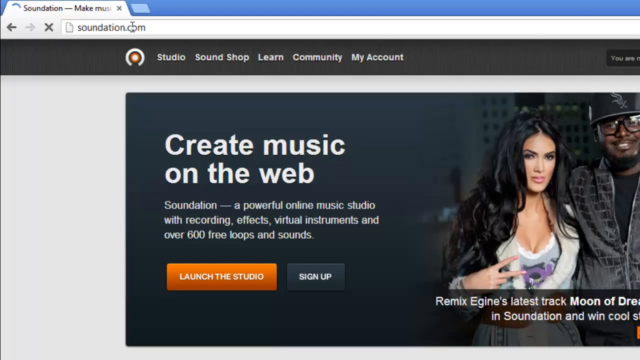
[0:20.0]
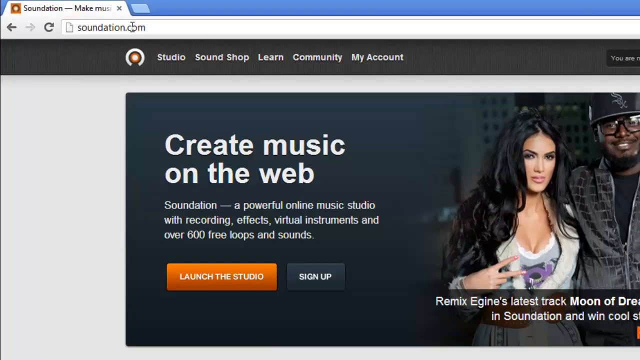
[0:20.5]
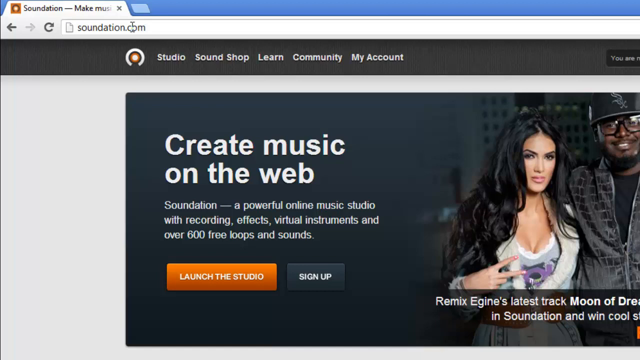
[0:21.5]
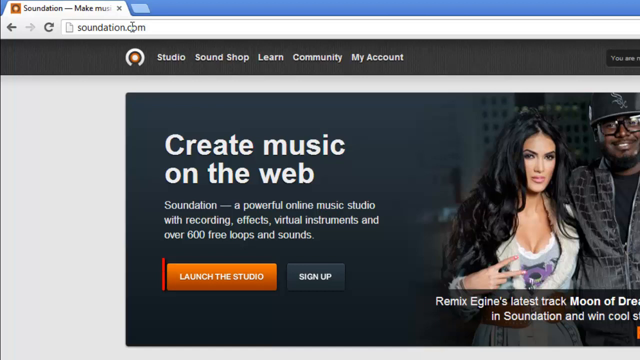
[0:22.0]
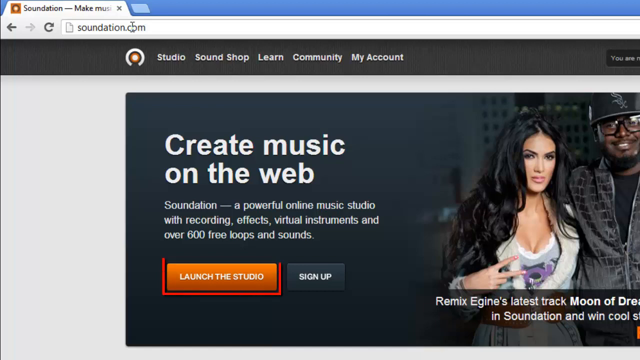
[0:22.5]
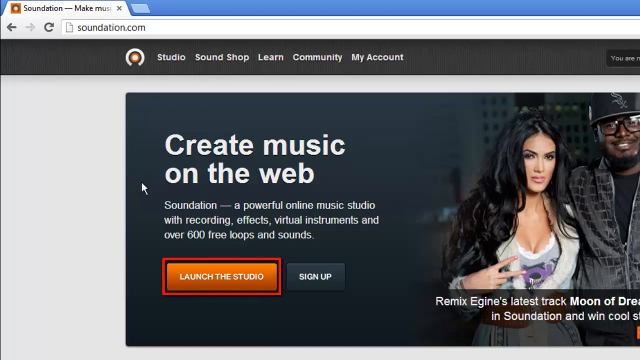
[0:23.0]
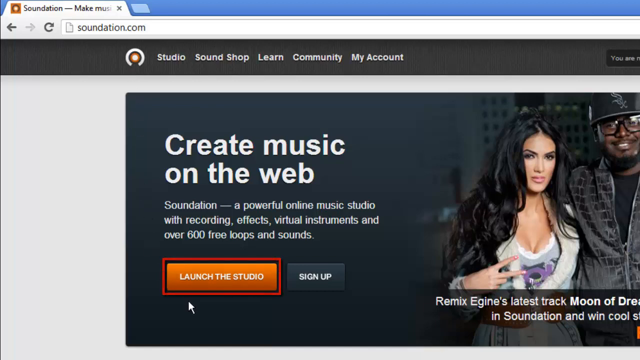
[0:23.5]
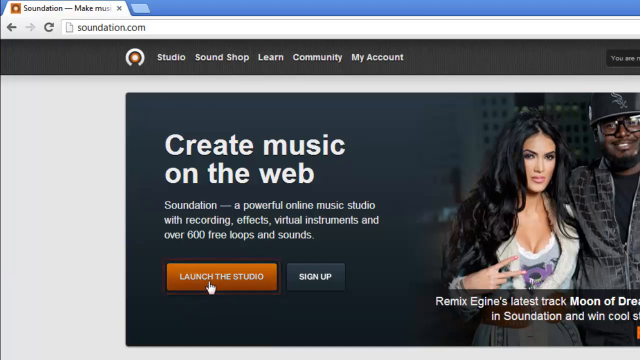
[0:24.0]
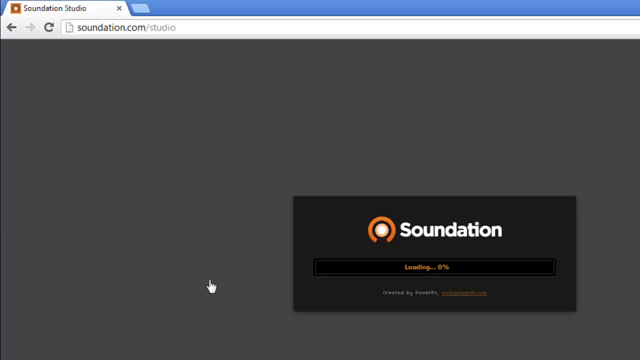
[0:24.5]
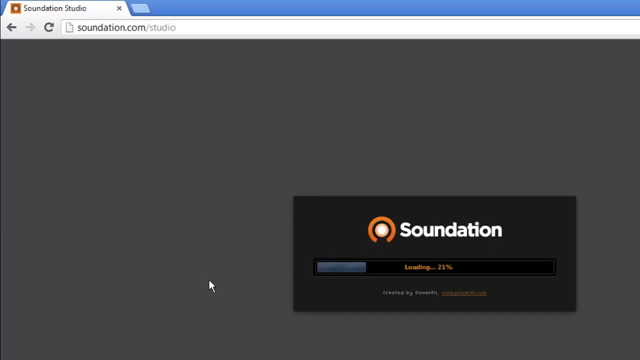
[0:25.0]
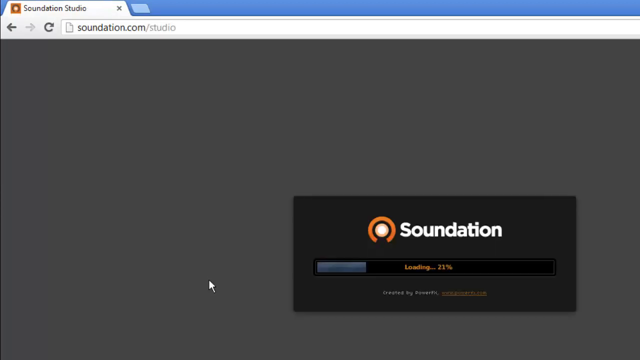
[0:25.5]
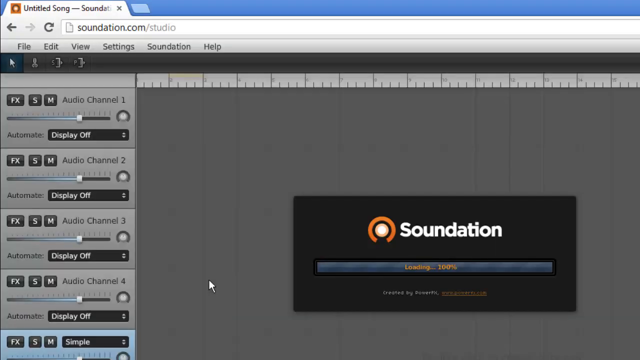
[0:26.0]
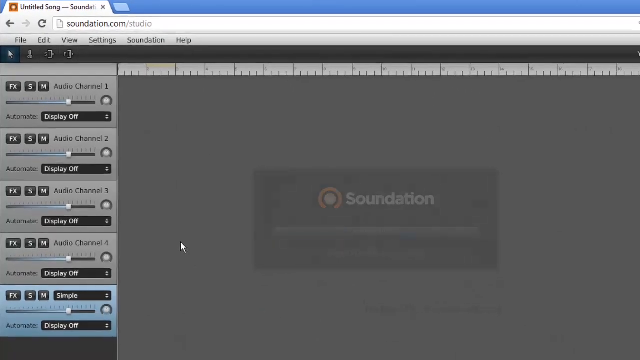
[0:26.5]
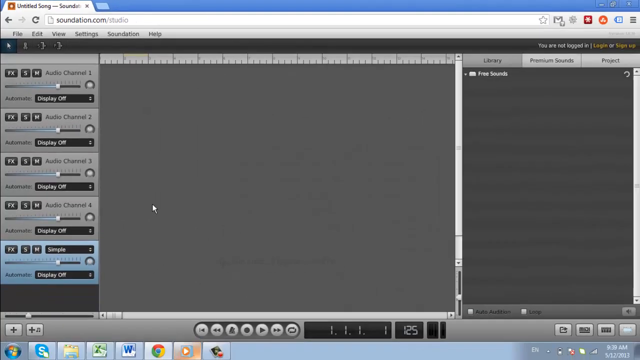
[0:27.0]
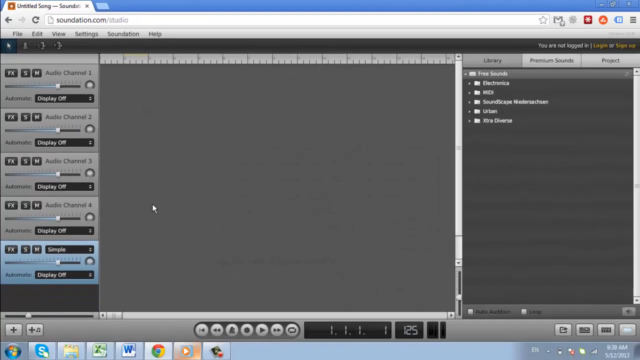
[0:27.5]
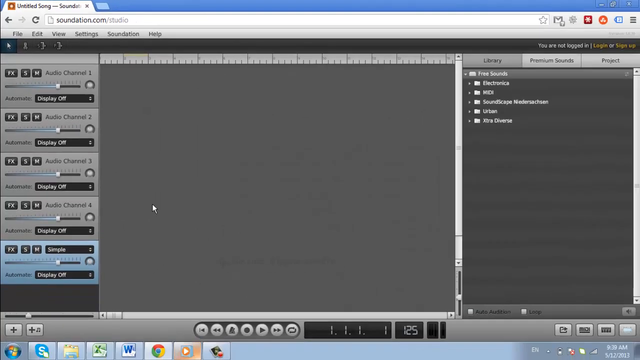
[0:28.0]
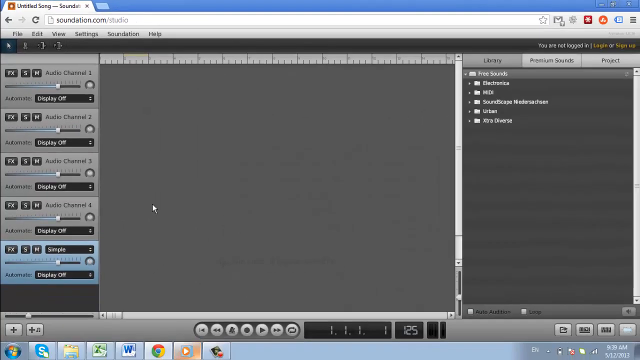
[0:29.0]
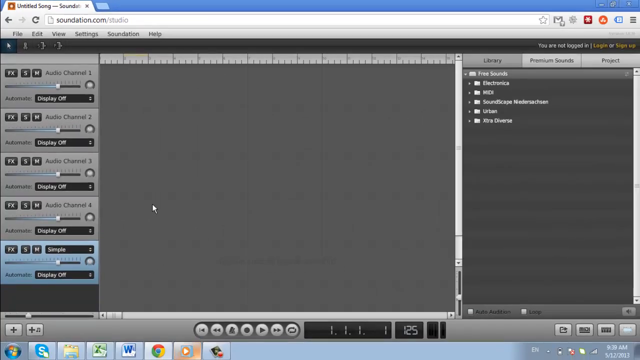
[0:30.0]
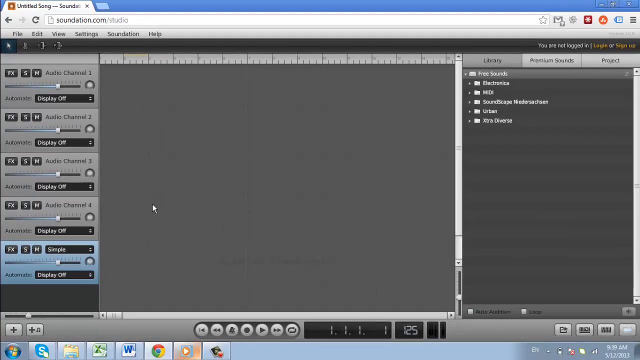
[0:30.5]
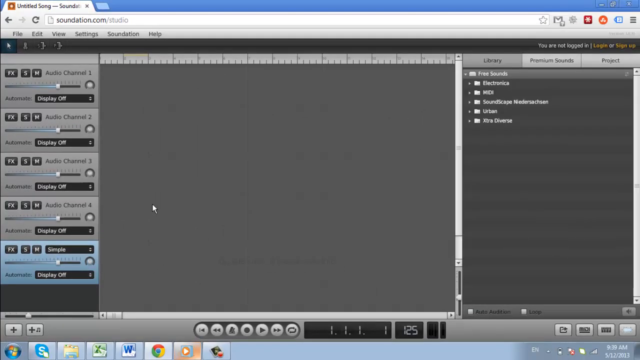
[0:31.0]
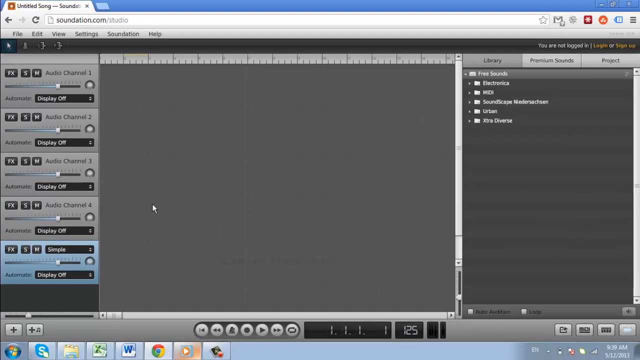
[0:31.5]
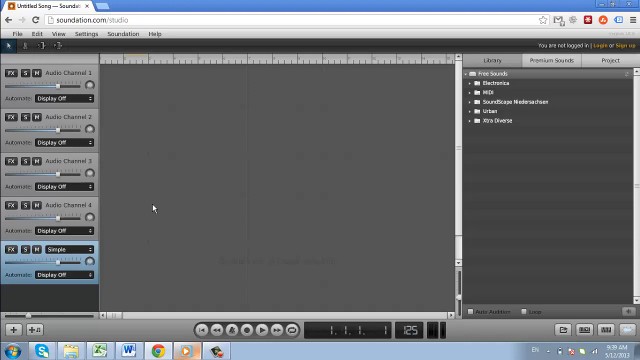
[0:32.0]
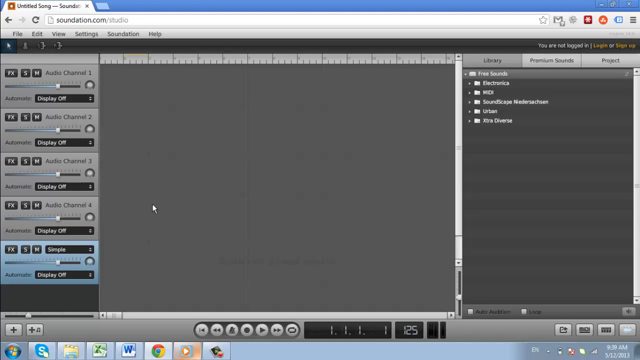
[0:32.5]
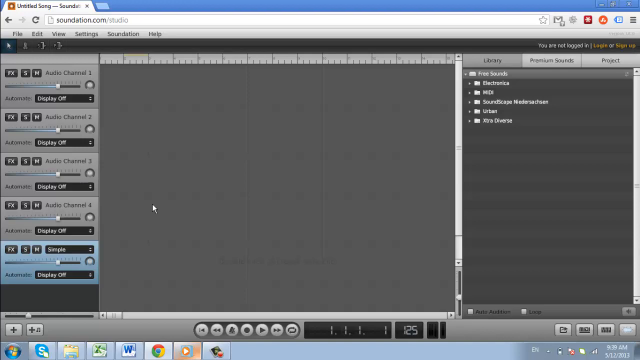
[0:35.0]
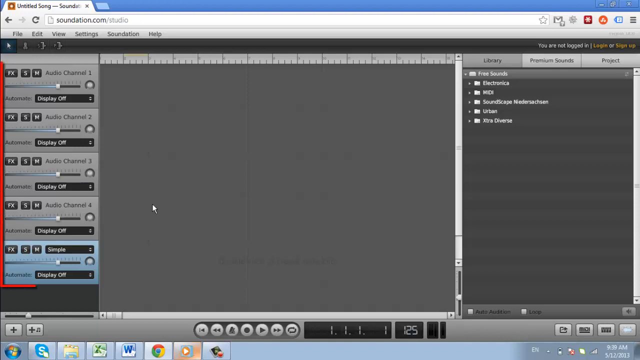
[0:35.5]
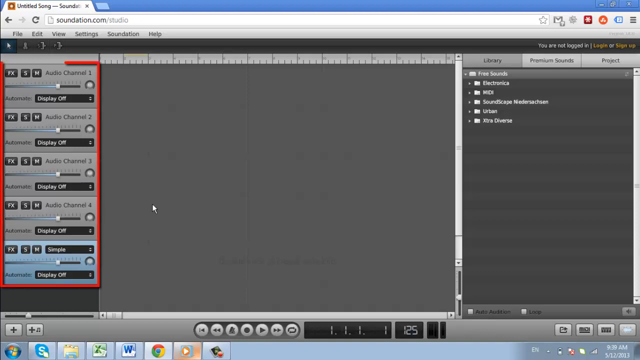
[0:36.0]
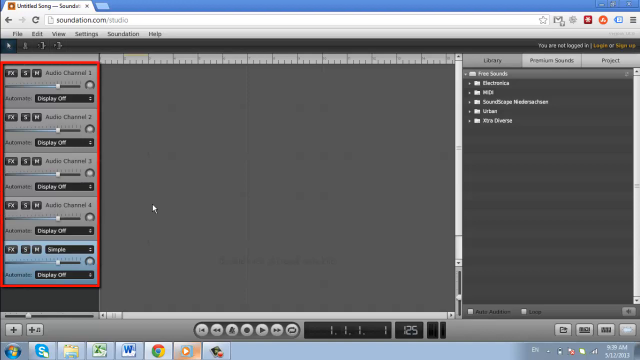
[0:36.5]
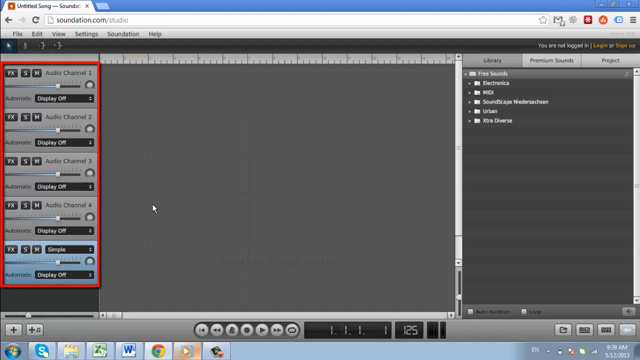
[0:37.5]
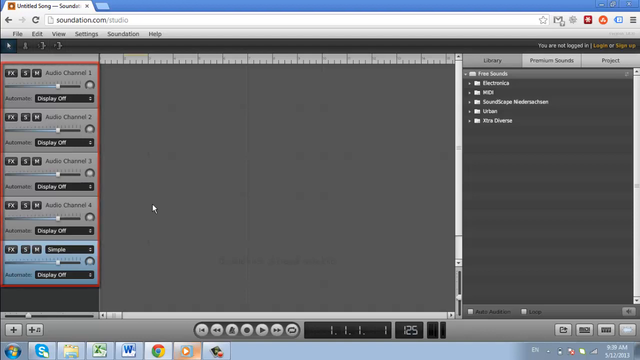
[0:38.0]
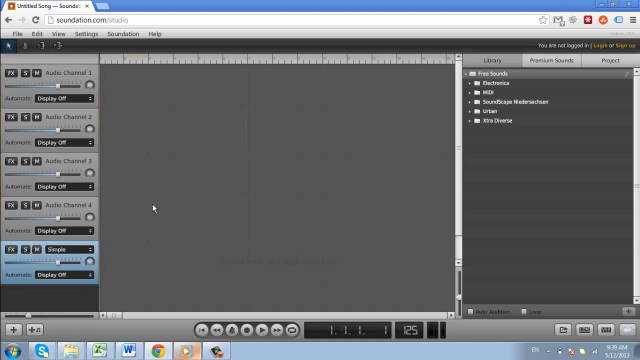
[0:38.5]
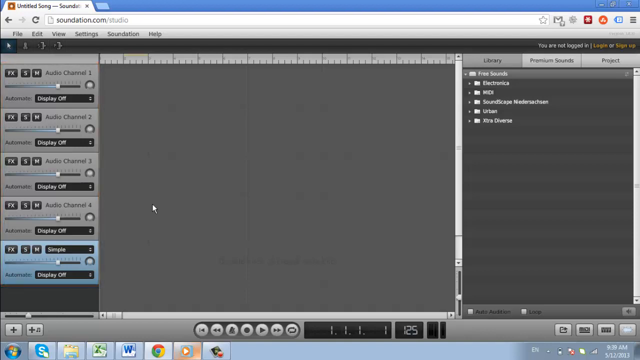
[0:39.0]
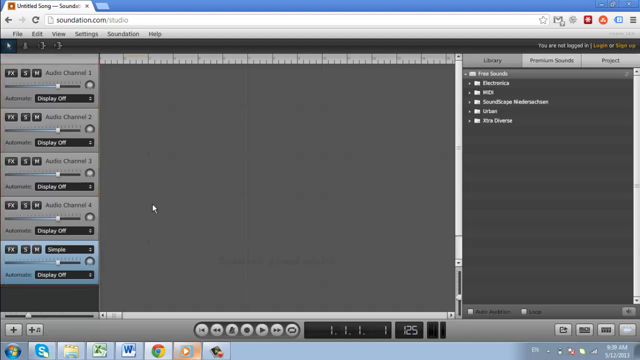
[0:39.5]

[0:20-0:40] The browser recording continues on the web page soundation.com. At the very top of the page is a black banner with links that read "Studio," "SoundShop," "Learn," "Community," and "My Account." Below it, a larger image in the center of the page on a white background shows a woman making a peace sign with her right hand, standing next to a man who has his arm wrapped around her back. Text to the left of them reads "Create Music on the Web. Soundation, a powerful online music studio with recording, effects, virtual instruments, and over 600 free loops and sounds." Underneath this text are three buttons, the left one orange and the right one black; the orange button reads "Launch the Studio" and the black button reads "Sign Up." A red box has been added circling the orange button. The user moves the mouse cursor down to the orange button and clicks once, and a new screen appears as the URL changes to soundation.com/studio.